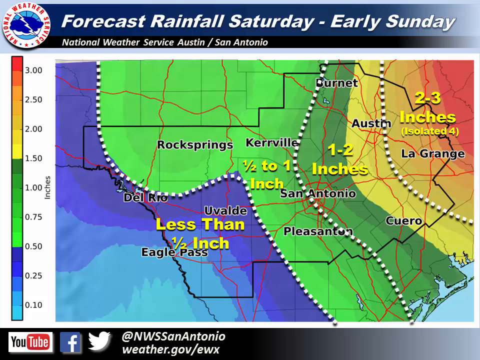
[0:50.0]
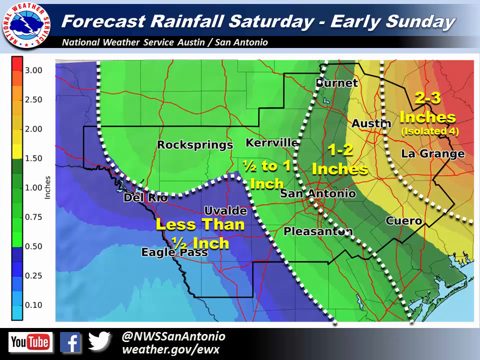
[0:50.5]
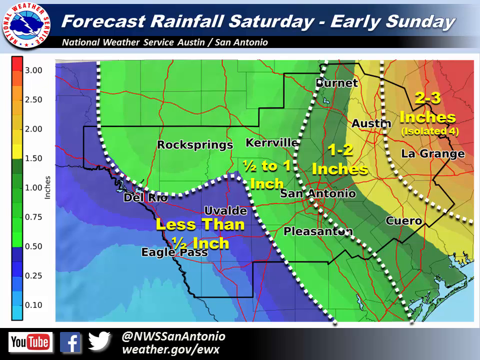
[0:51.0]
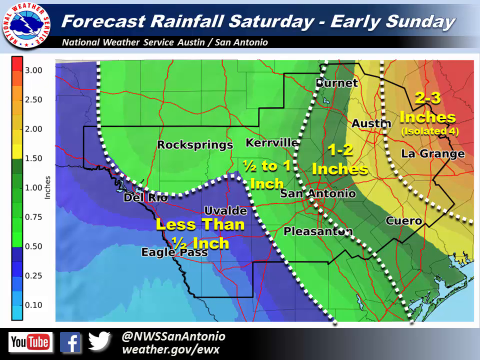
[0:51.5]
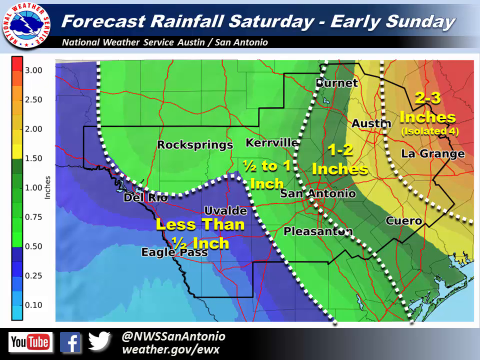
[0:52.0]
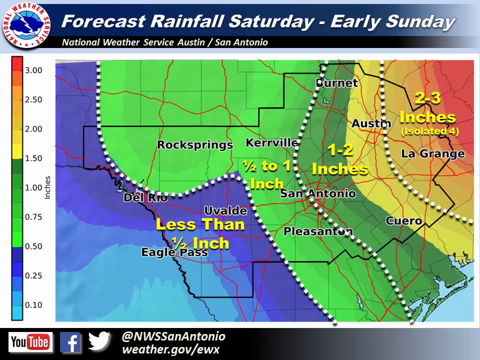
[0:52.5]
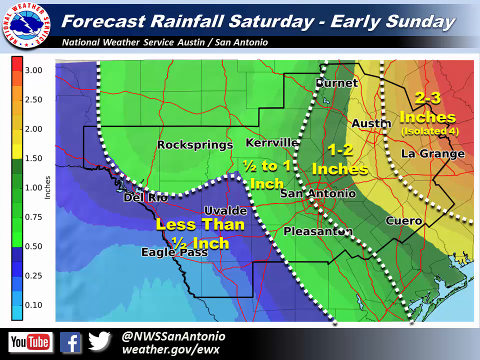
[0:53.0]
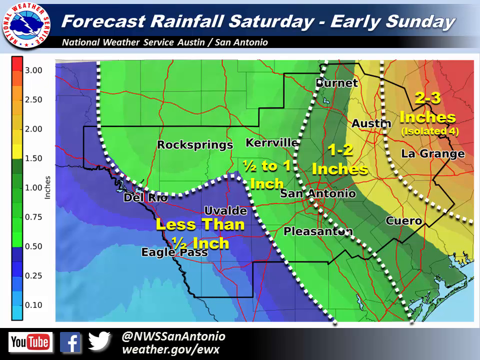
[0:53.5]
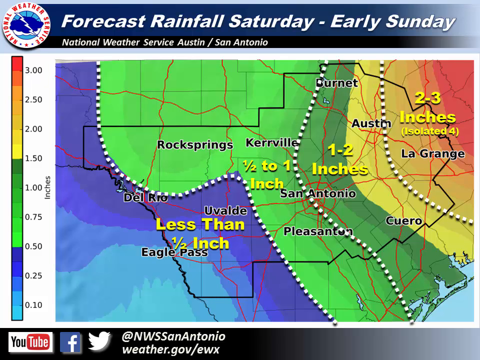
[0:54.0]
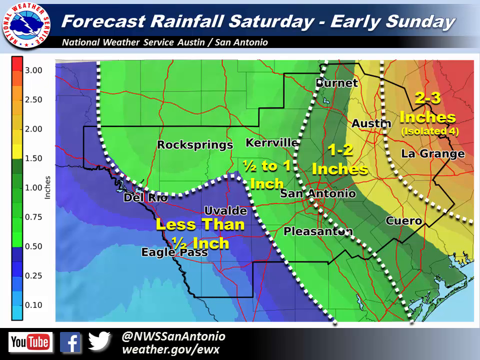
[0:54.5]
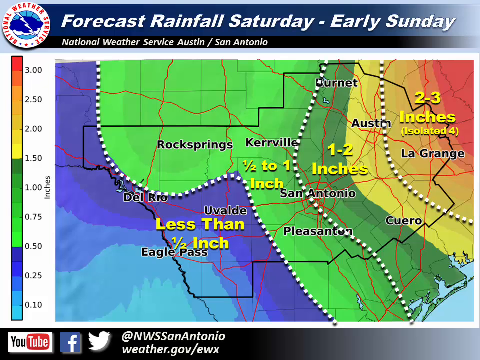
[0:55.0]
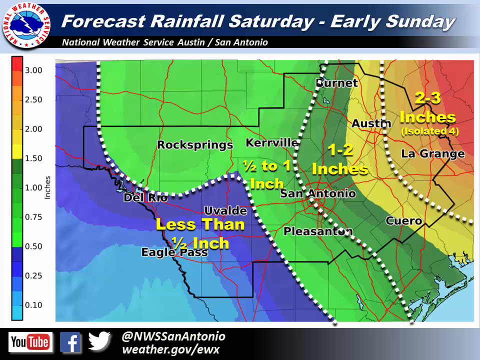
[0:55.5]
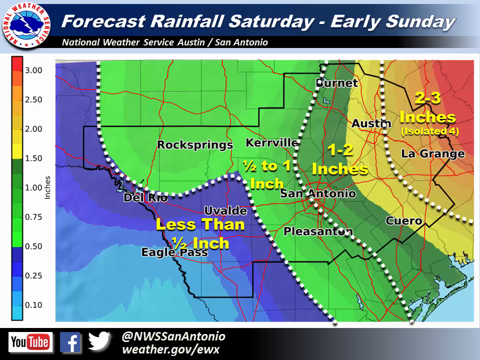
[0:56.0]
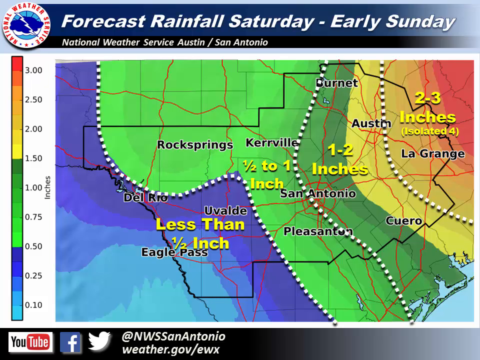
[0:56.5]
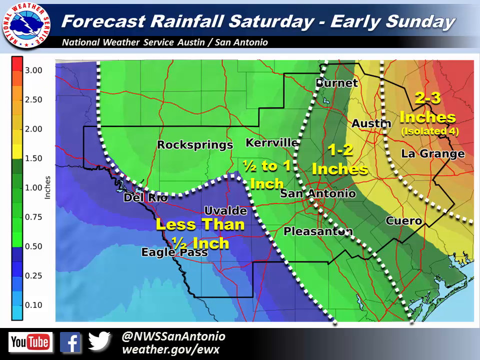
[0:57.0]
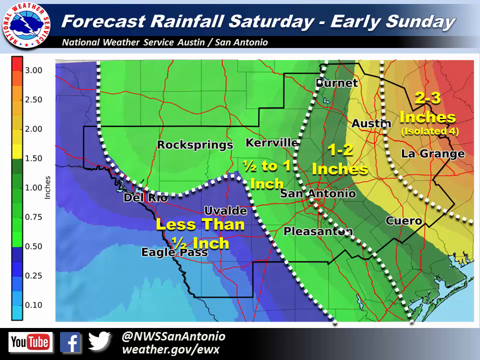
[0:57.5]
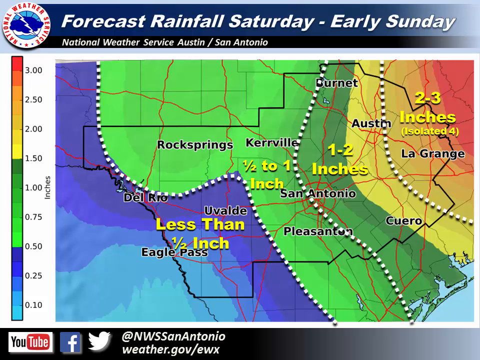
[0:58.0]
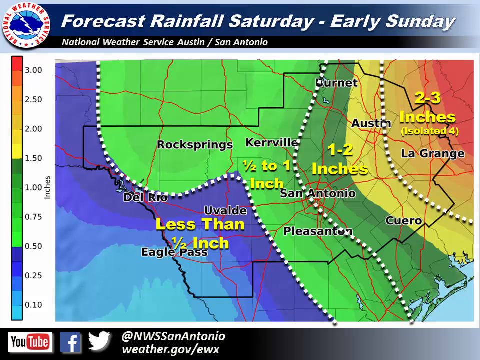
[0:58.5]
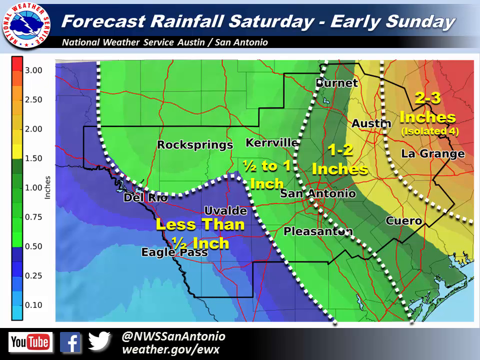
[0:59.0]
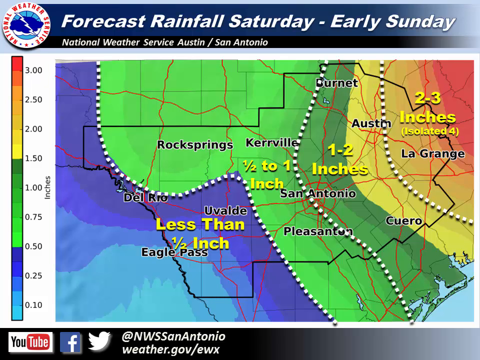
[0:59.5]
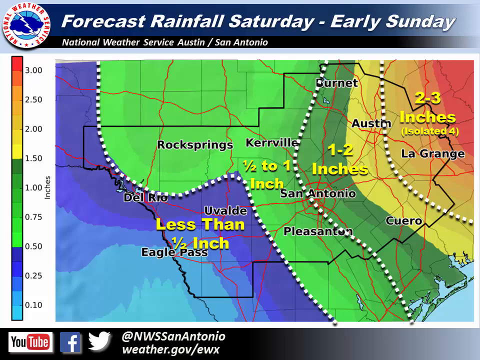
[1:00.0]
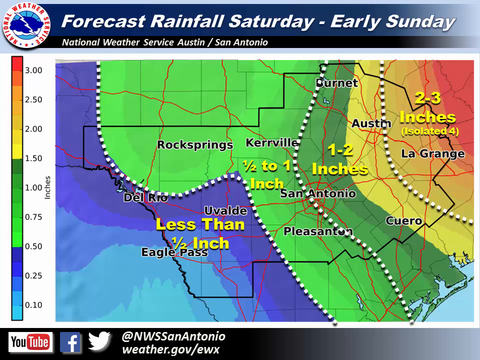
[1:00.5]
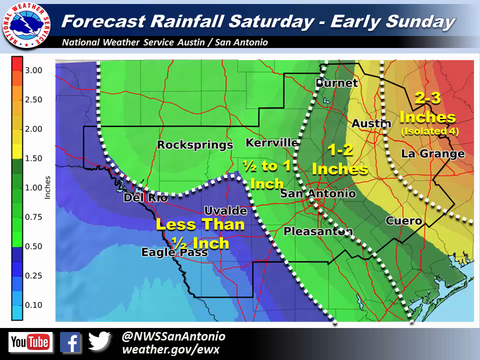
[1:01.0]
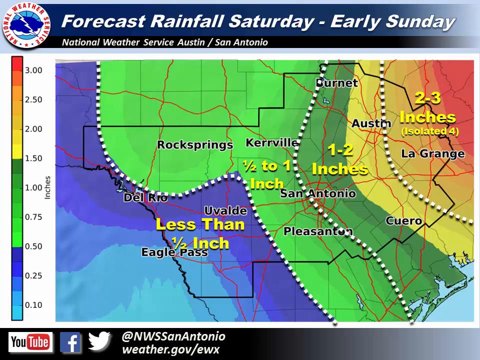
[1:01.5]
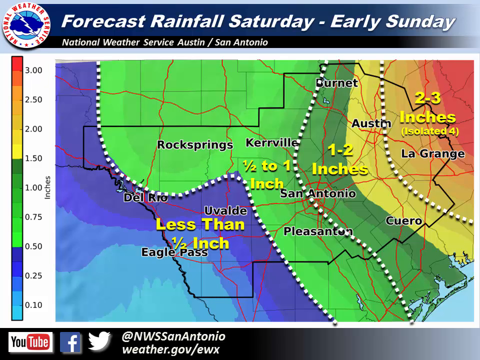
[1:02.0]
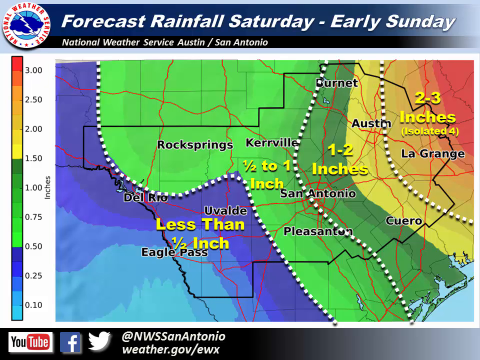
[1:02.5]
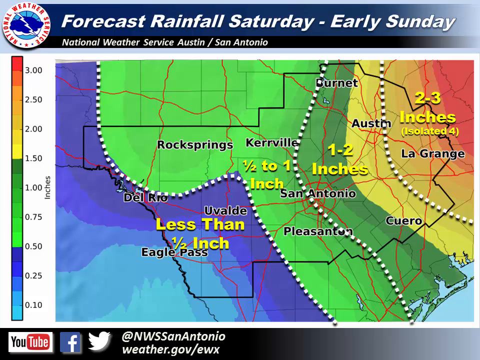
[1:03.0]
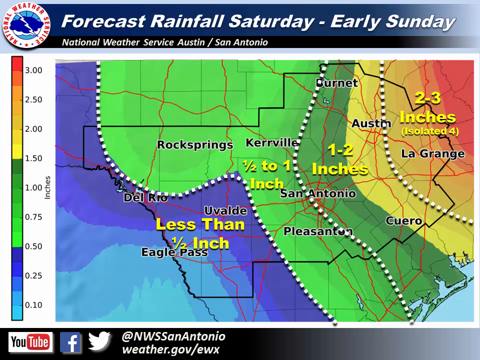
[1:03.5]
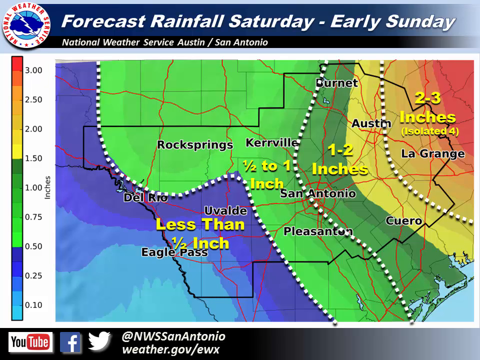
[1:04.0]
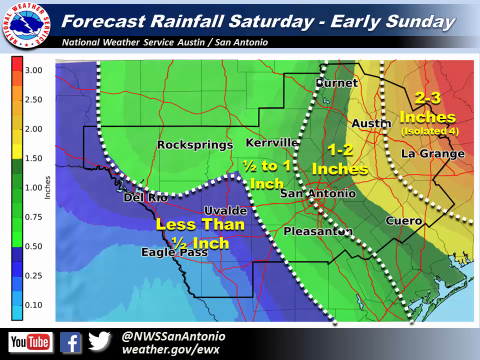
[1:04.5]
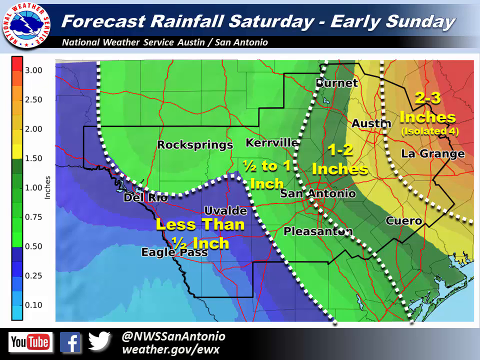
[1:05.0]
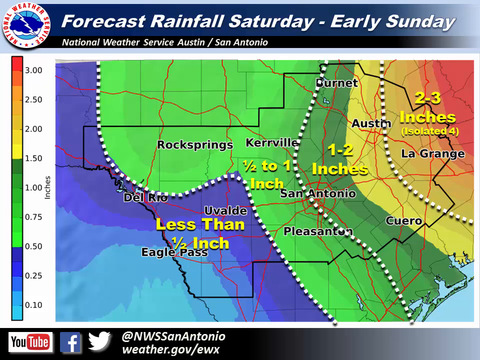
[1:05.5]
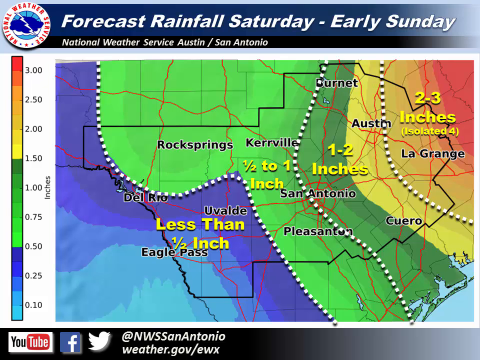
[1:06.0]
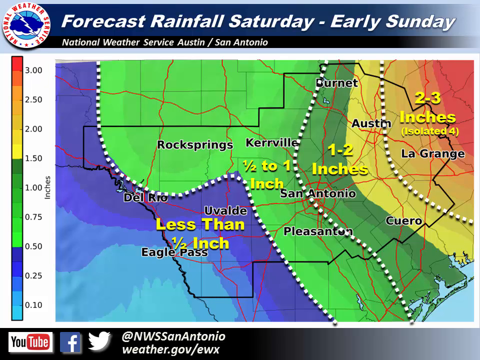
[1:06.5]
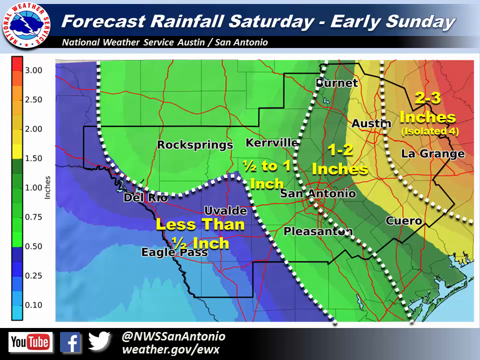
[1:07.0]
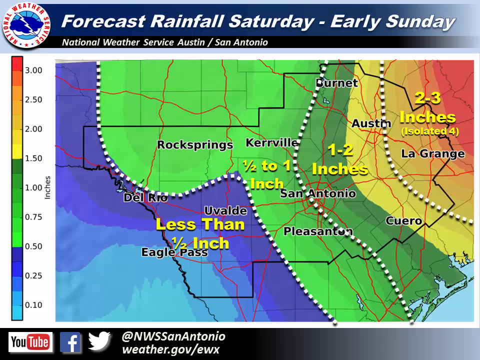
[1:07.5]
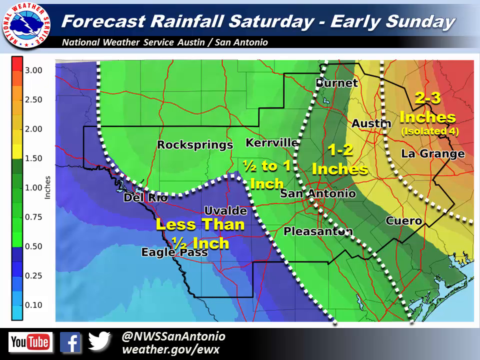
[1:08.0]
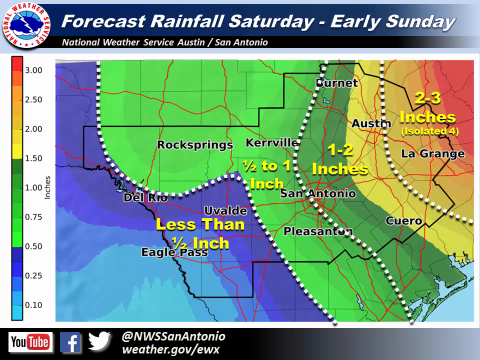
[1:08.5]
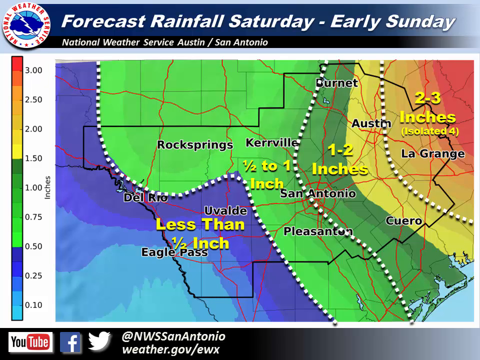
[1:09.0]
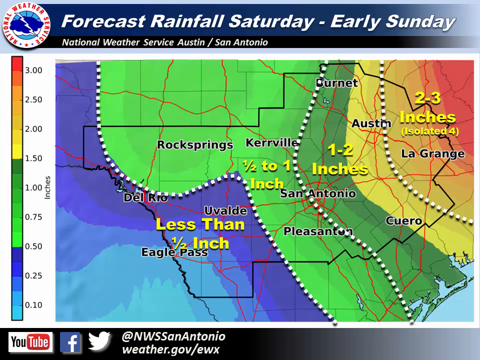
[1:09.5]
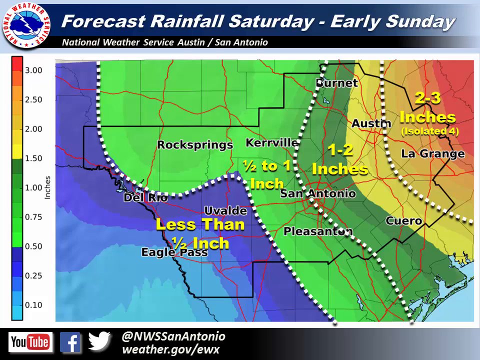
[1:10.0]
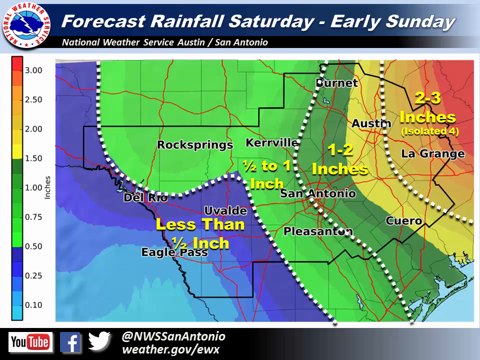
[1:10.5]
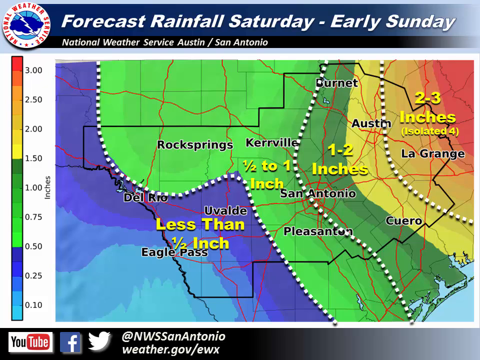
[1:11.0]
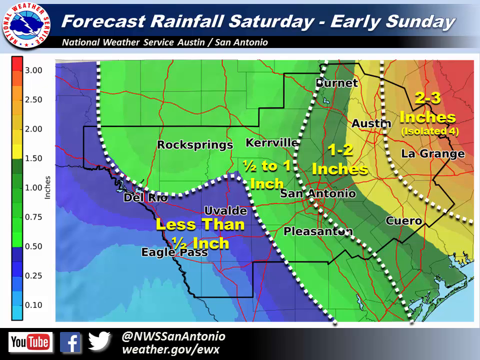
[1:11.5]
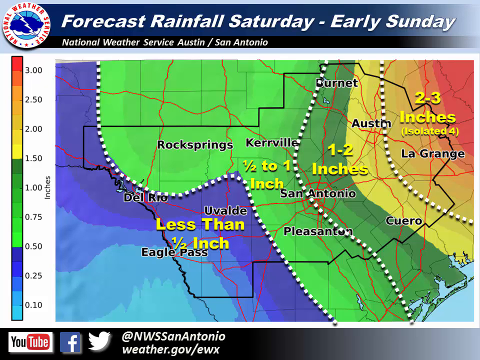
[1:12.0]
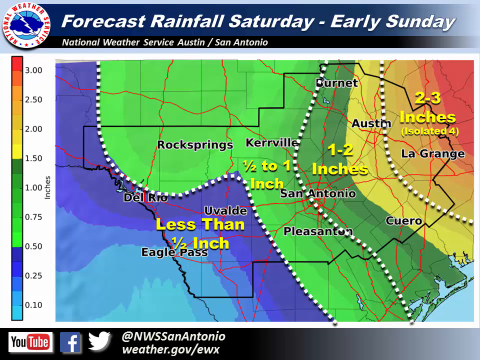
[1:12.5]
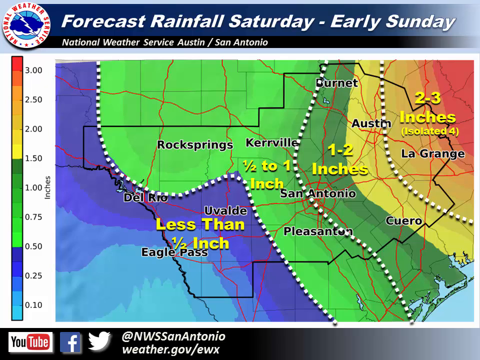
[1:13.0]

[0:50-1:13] The video shows the rain forecast for Saturday to early Sunday, still from the National Weather Service Austin/San Antonio. A zoomed-out map has different color shades: three shades of blue, two greens, a yellow and a red. A measurement on the left side shows that each color corresponds to a different number of inches. Places on the map include Kerrville, Aston, La Grange, San Antonio, Pleasanton, Cuero and many others. The inch amounts are marked in bold yellow: "less than half inch" is written where the blue colors are, "half to one inch" in another shade of green, "one to two inches" in a green shading into yellow, and "two to three inches isolated" on a brownish reddish color in the far right corner of the map.